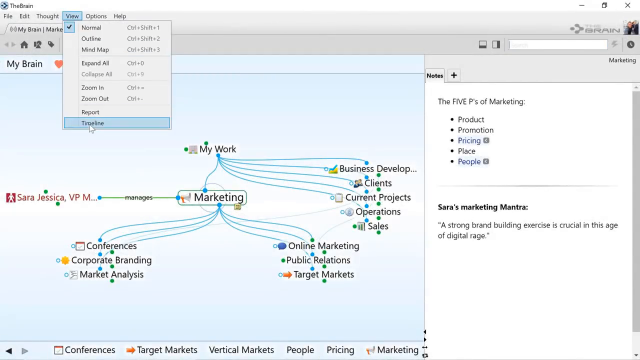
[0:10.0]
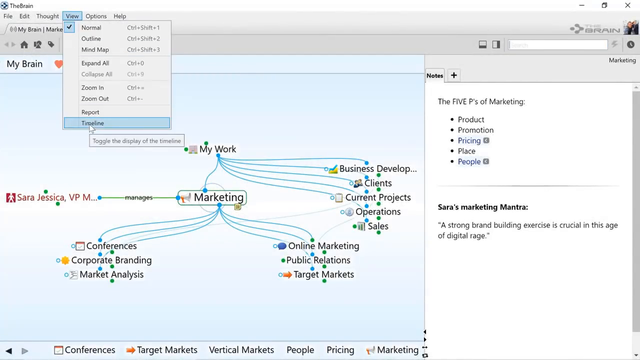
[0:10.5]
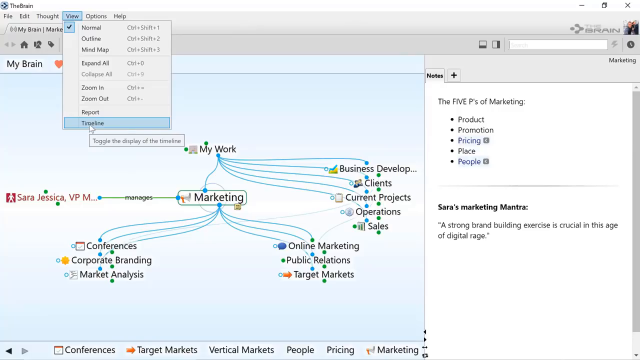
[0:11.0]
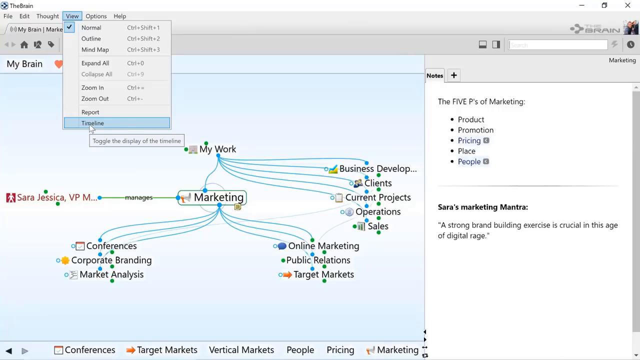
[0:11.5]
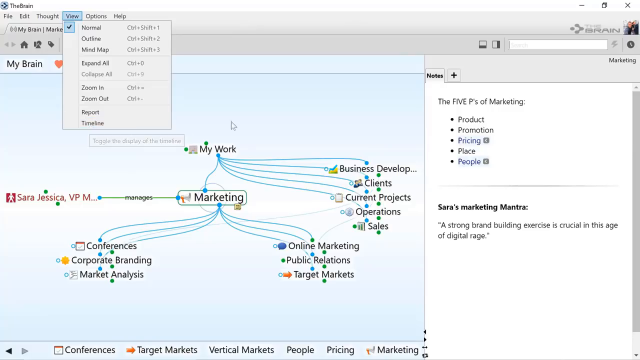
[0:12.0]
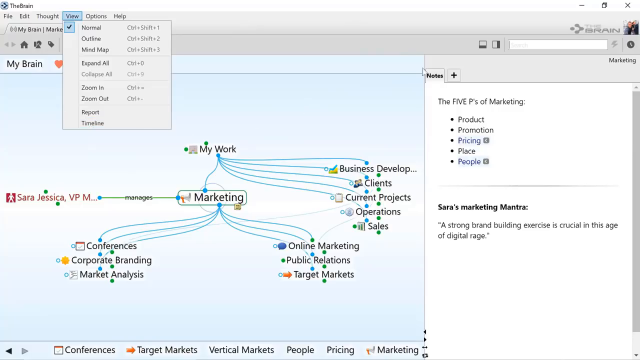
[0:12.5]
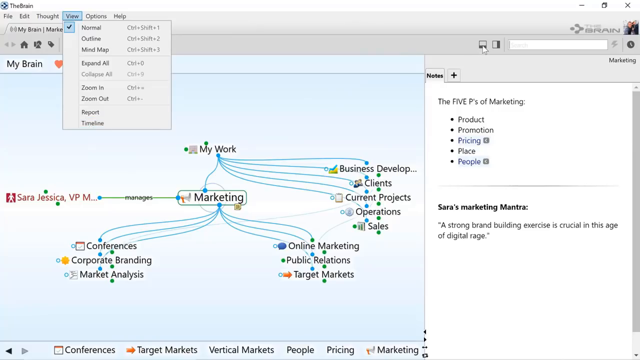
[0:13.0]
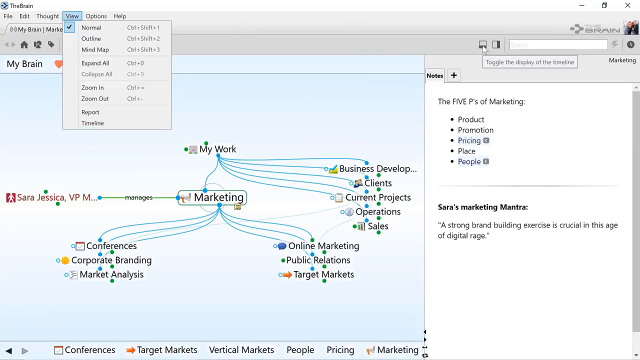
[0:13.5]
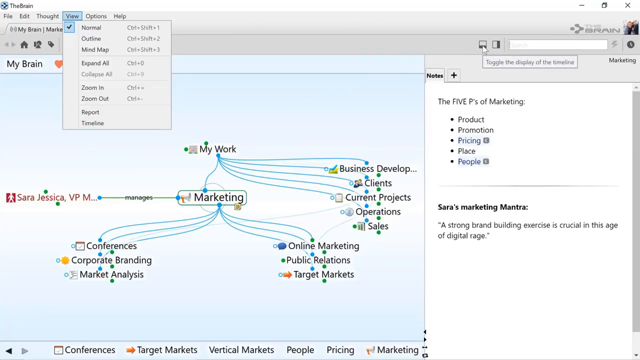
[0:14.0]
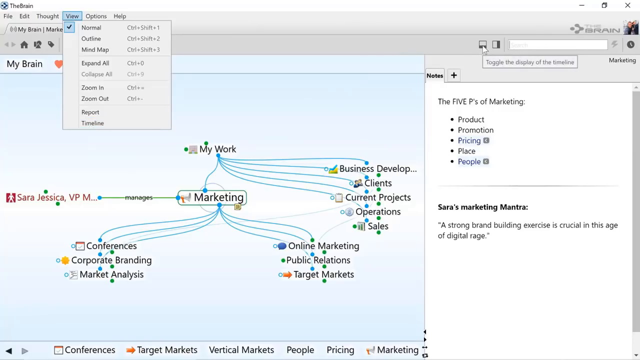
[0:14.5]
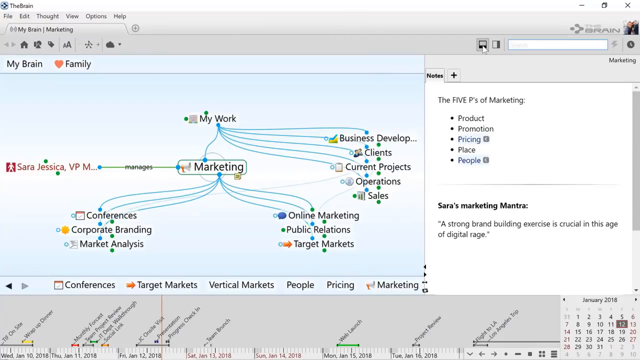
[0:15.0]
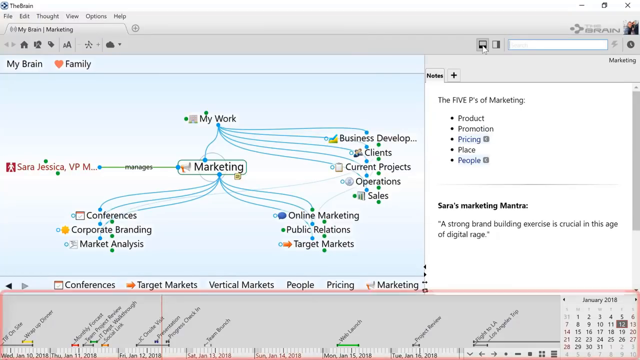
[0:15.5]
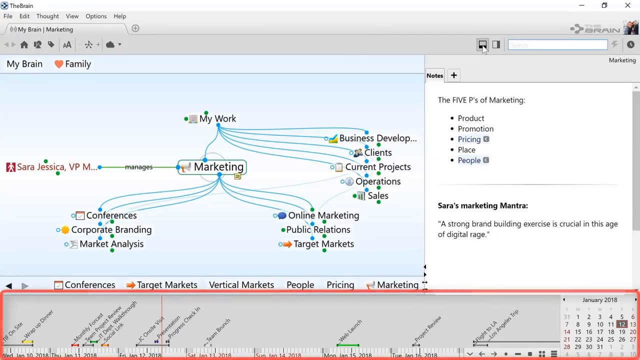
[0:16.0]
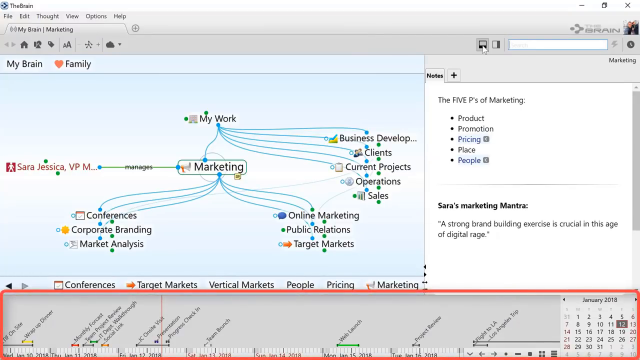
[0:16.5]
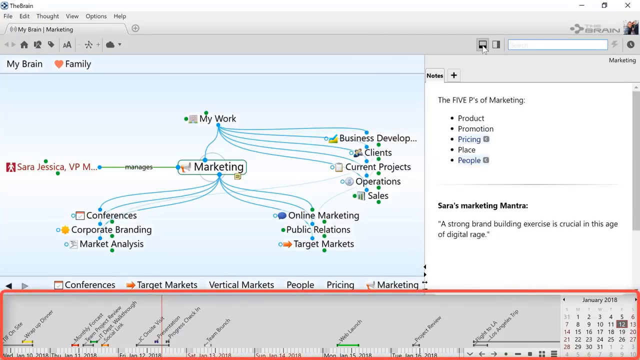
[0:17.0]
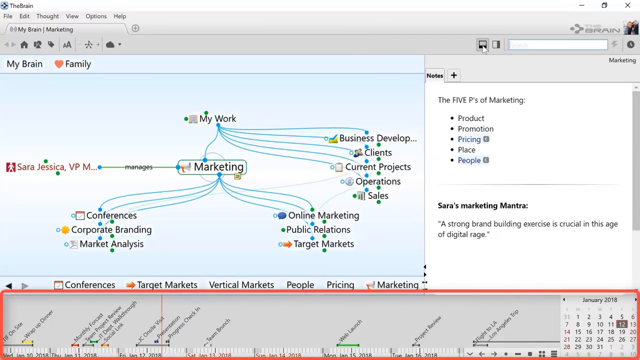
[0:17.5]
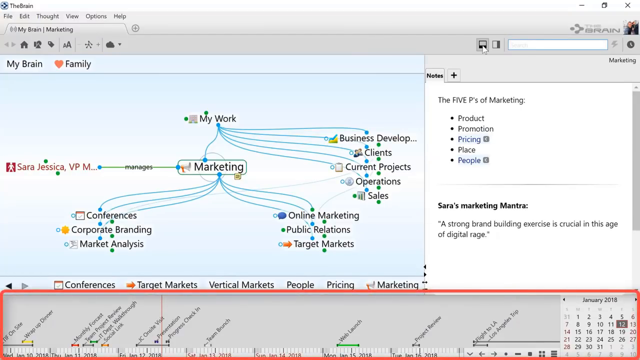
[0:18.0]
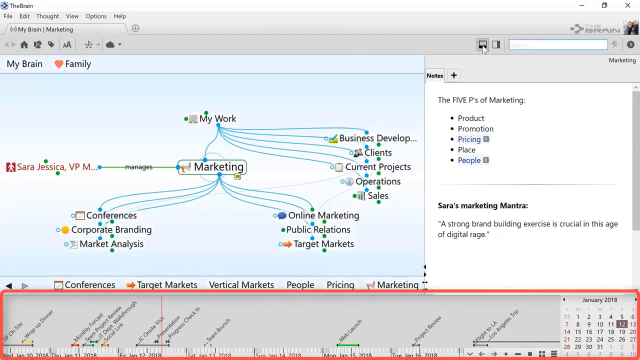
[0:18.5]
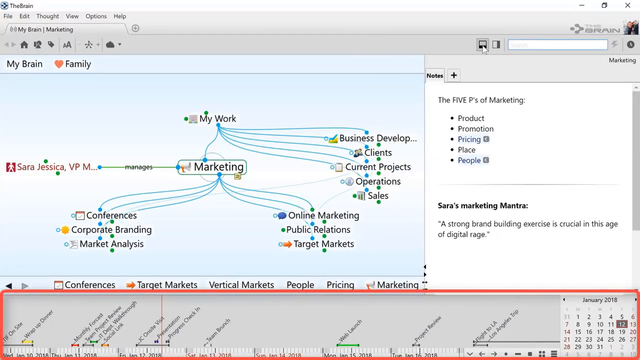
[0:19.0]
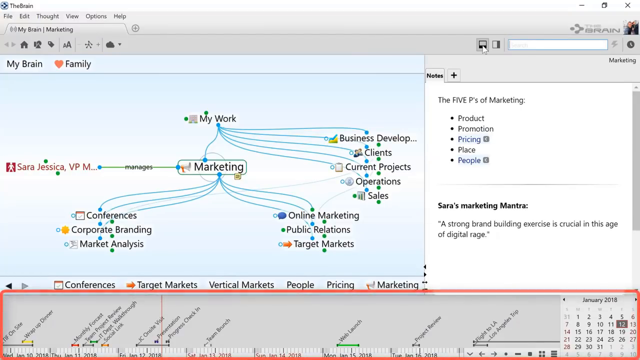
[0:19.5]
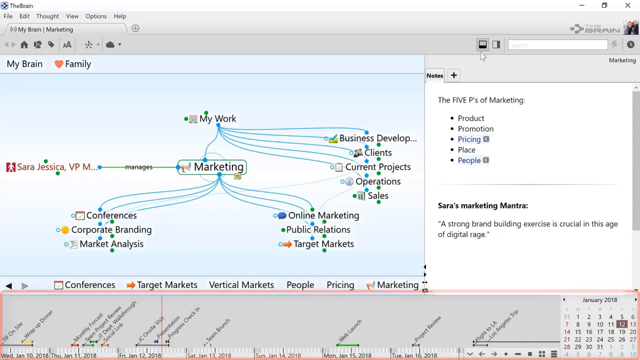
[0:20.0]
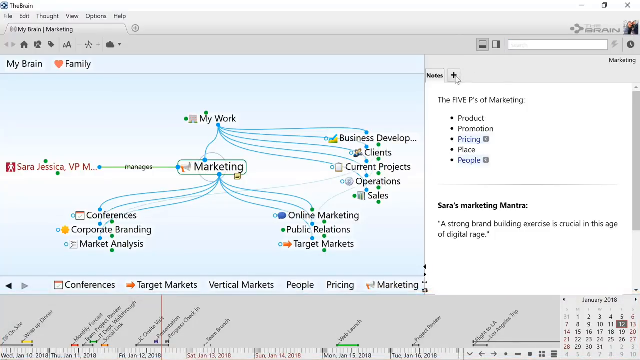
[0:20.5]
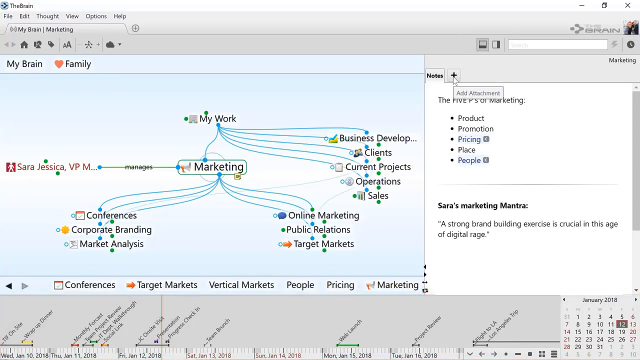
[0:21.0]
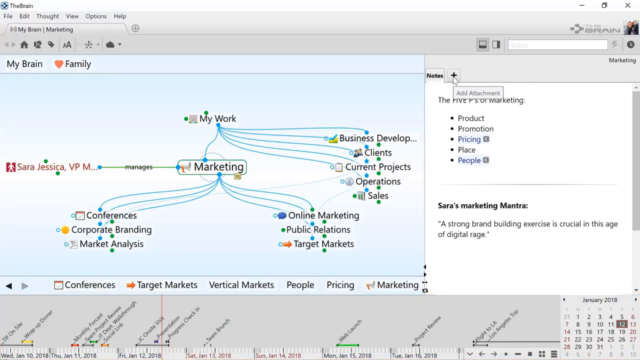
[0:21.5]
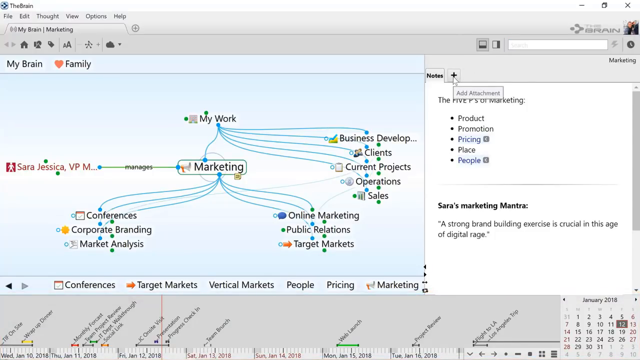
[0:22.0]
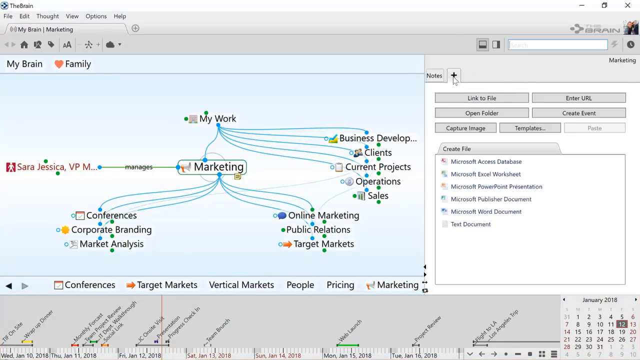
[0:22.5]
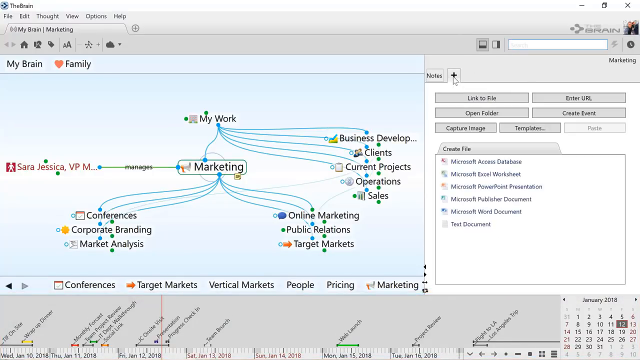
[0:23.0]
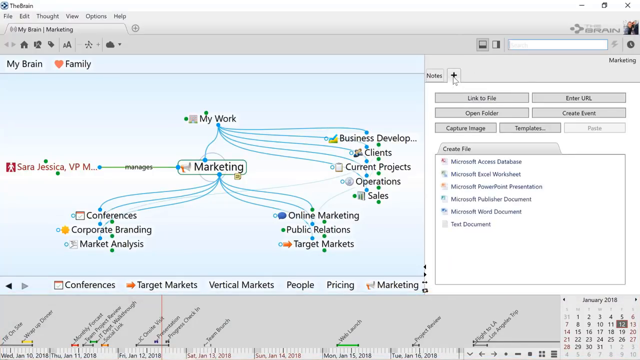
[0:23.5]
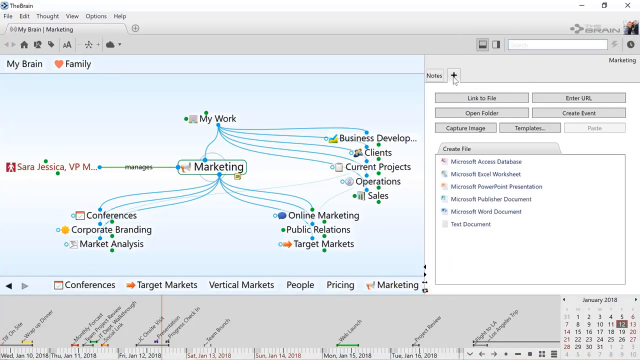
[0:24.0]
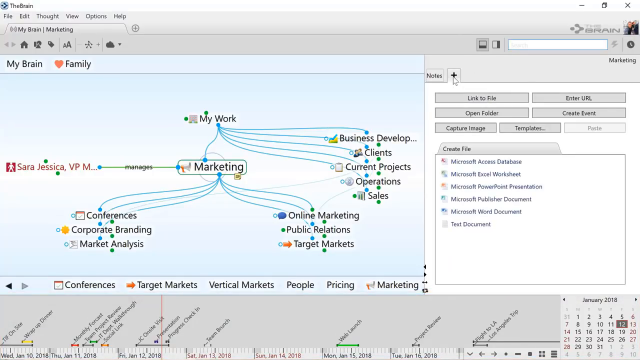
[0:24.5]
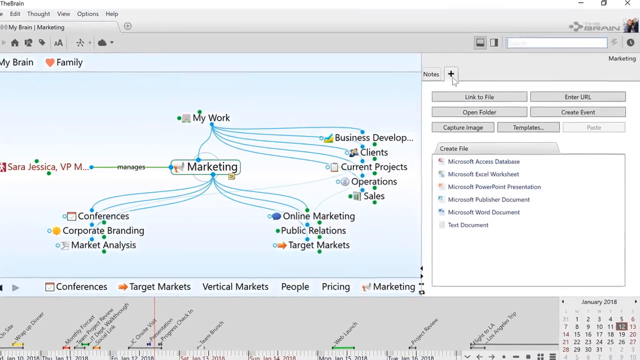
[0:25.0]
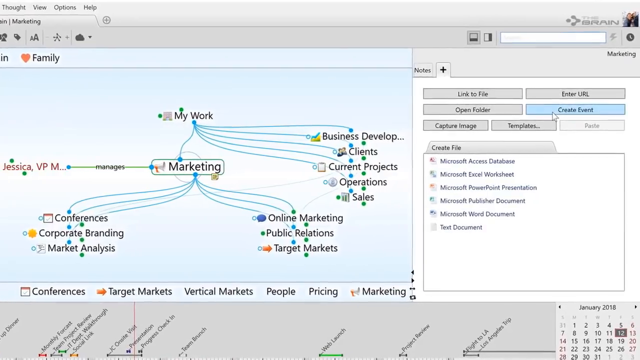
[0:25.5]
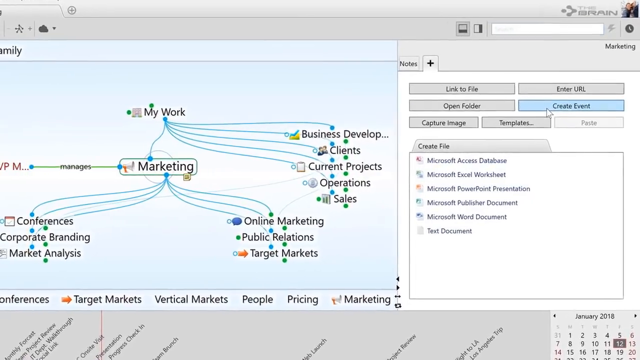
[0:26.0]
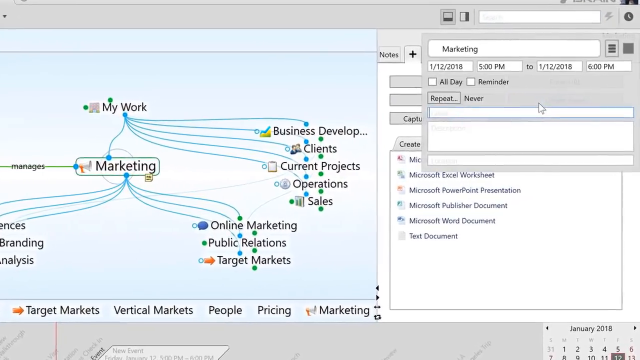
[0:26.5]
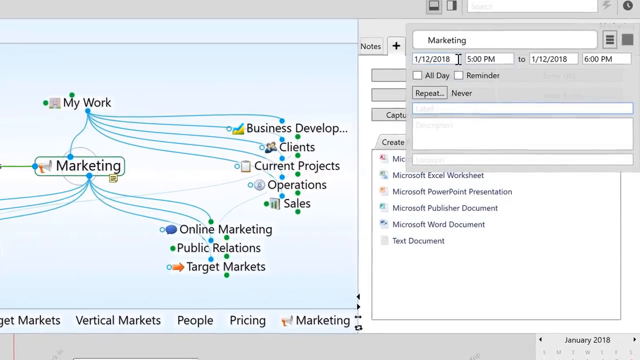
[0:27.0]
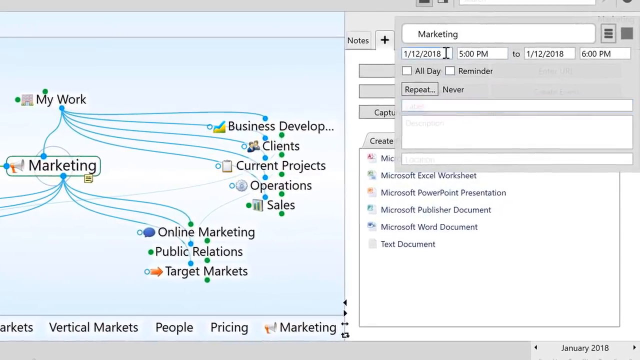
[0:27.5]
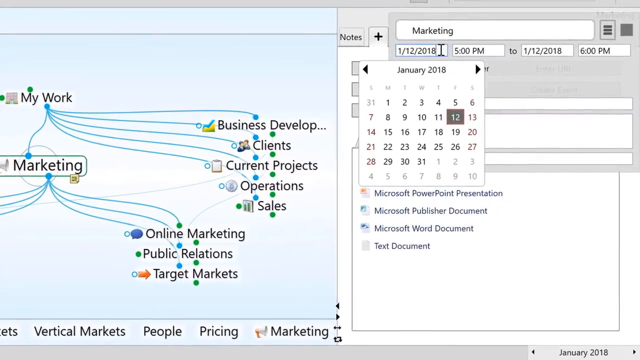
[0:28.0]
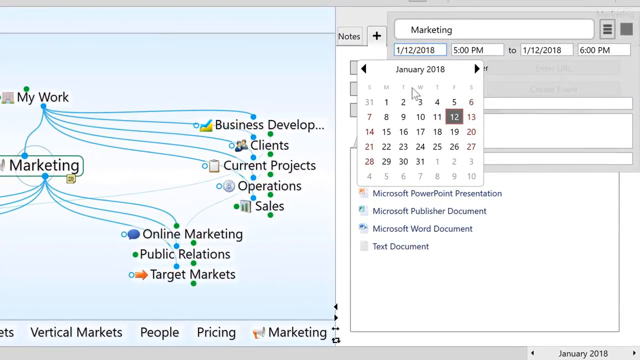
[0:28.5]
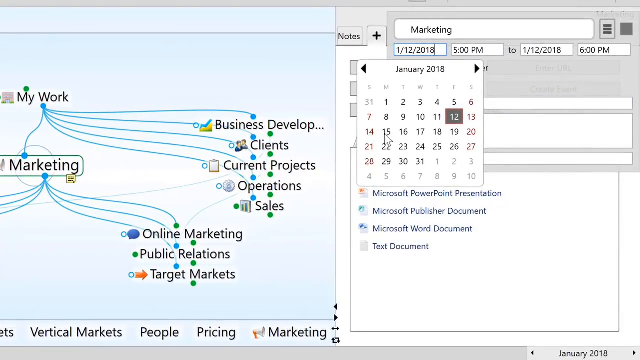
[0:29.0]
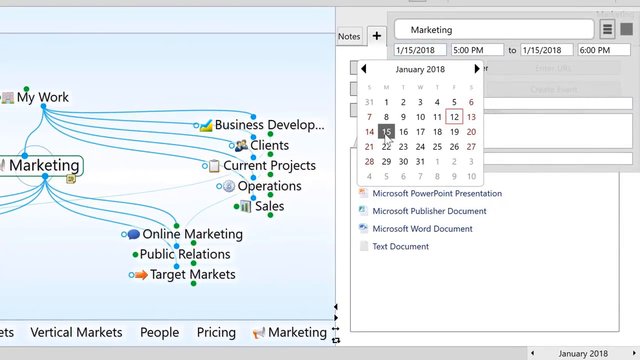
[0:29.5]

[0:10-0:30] The display is now green. A menu reads File, Edit, Thought, View, Options, Help, with the View tab selected; its options are Normal, Outline, Mind Map, Expand All, Zoom In, Zoom Out, Report, and Timeline, and Normal is selected. In a corner of the screen is a photo of the user, probably their profile photo. An option orients the timeline display to the bottom or to the right of the screen, so it flows either horizontally or vertically. The five Ps of marketing appear, along with the relationship between the user's "my work" and marketing, marketing's relationship to Jessica, and marketing's relationships to conferences, corporate branding, market analysis, online marketing, public relations, and target market. Under each of these relationships are green dots and red and blue dots indicating some sort of relationship. At the bottom of the screen is what appears to be a calendar function, laid out in a slanted way, showing travel, activities, and calendar events such as travel, a flight to LA, due dates, and monthly forecasts. In the marketing area of the screen, a plus sign is selected, bringing up options: link to files, enter URL, open folder, create event, capture image, templates. It then appears a file is being created, with choices of Microsoft Access Database, Microsoft Excel Worksheet, Microsoft PowerPoint Presentation, Microsoft Publisher Document, Microsoft Word Document, and Text Document. The view zooms in on the creation of a marketing document dated January 2018.